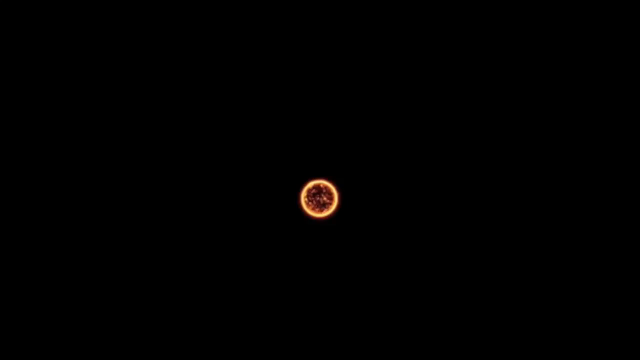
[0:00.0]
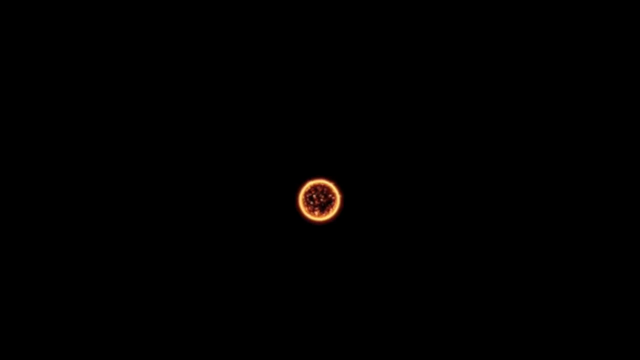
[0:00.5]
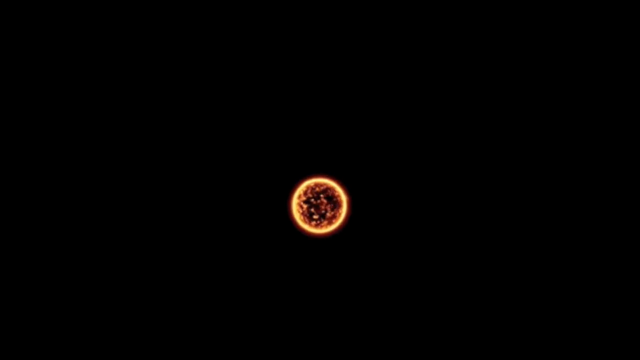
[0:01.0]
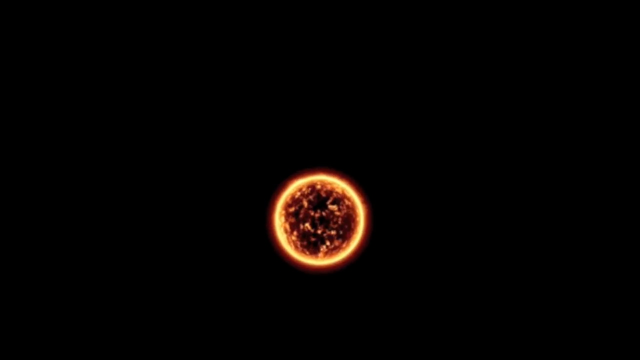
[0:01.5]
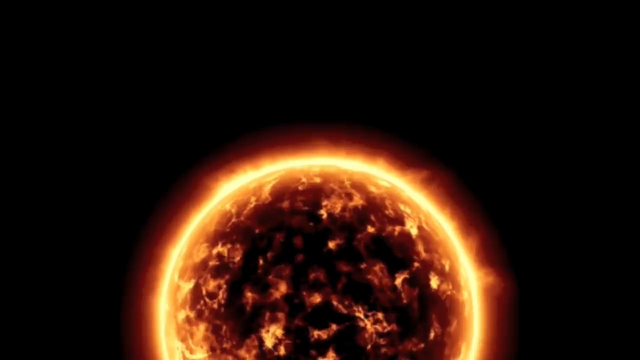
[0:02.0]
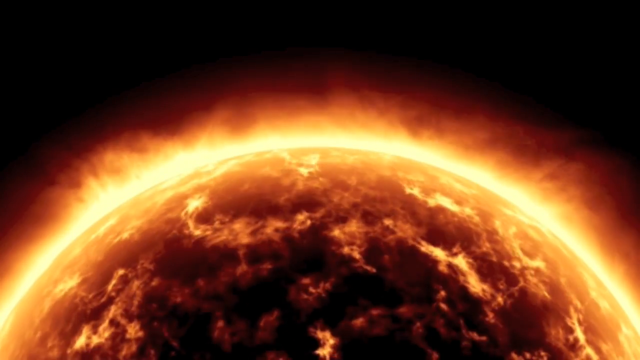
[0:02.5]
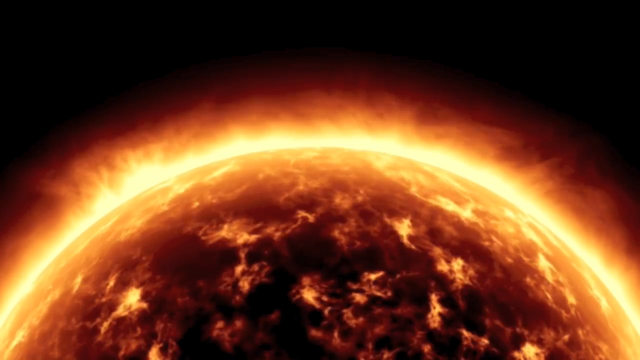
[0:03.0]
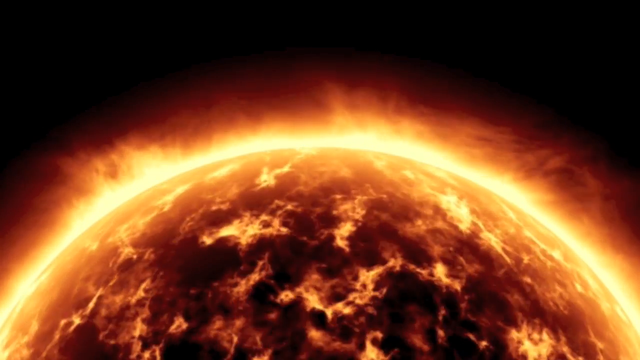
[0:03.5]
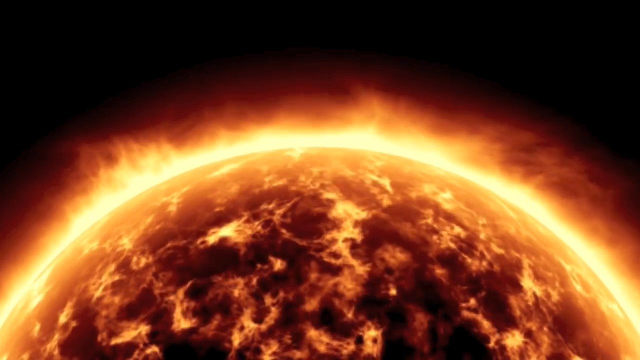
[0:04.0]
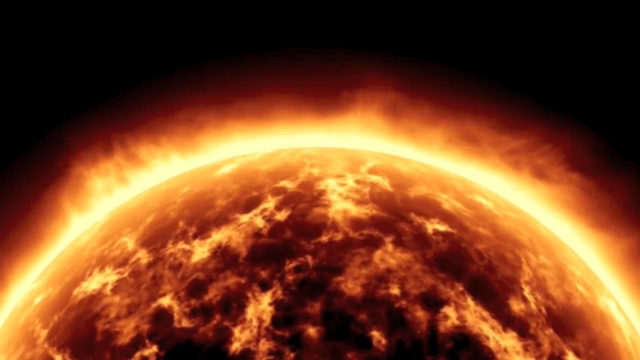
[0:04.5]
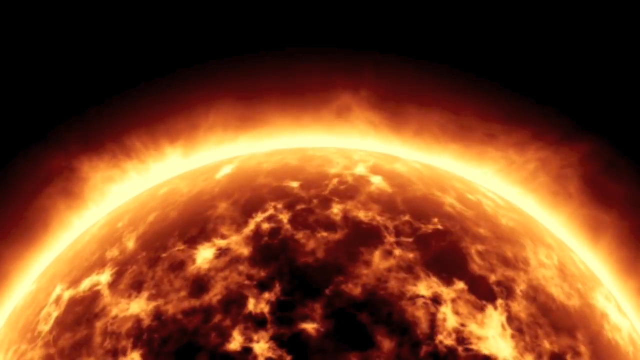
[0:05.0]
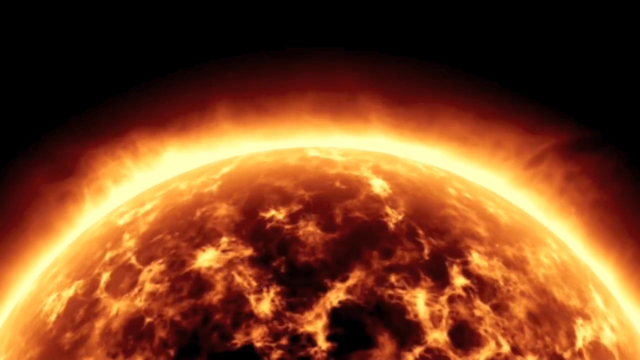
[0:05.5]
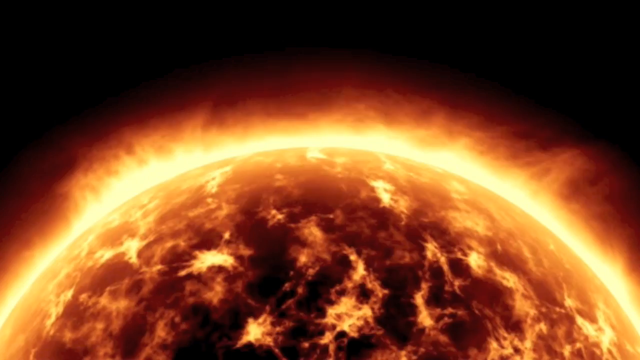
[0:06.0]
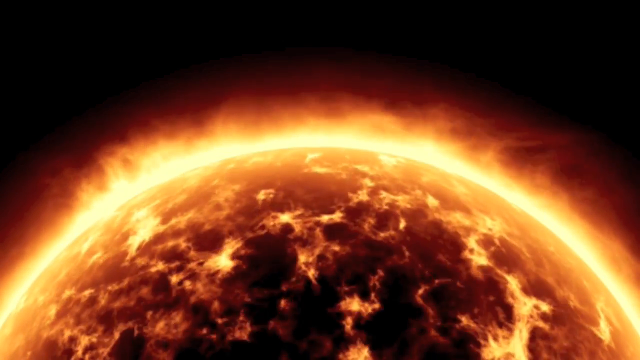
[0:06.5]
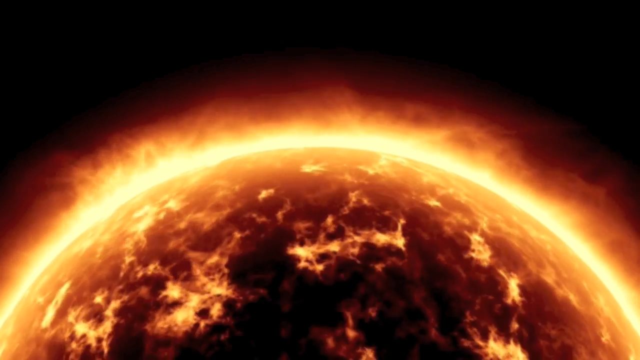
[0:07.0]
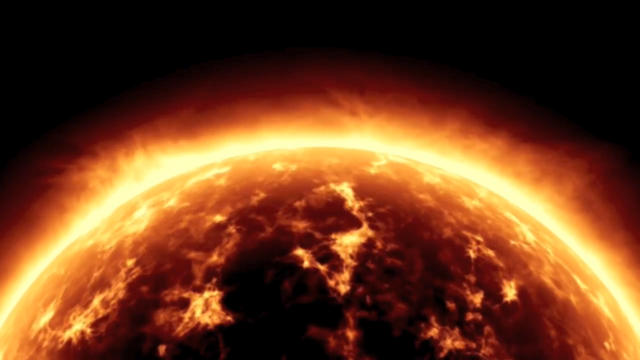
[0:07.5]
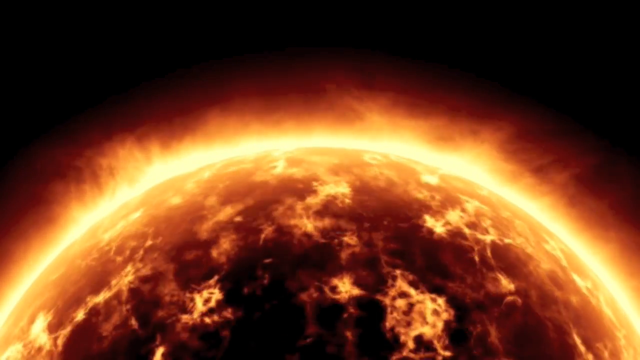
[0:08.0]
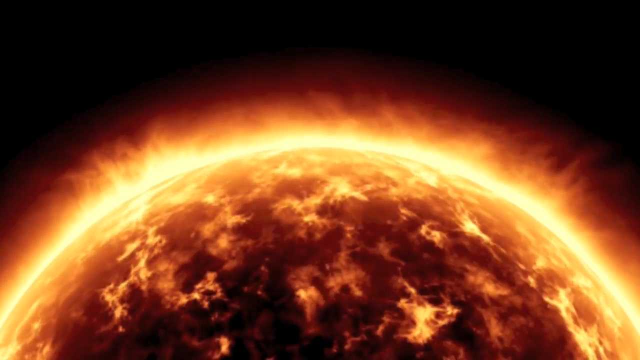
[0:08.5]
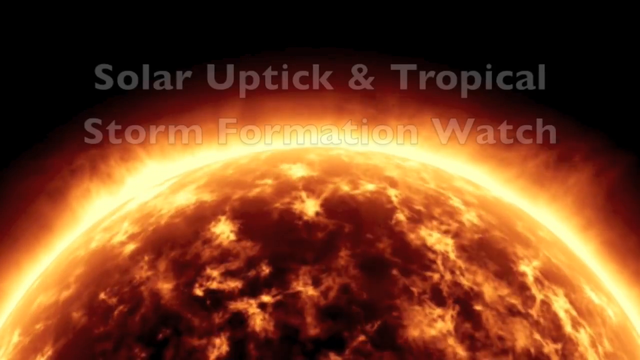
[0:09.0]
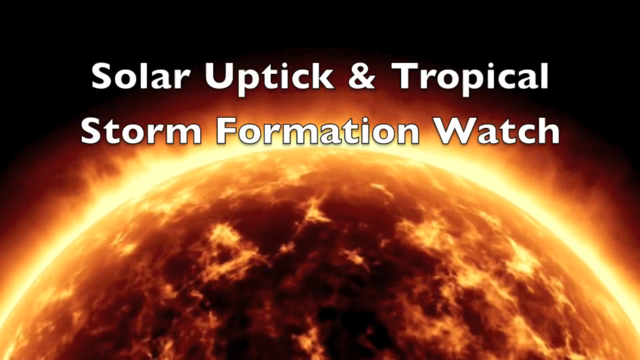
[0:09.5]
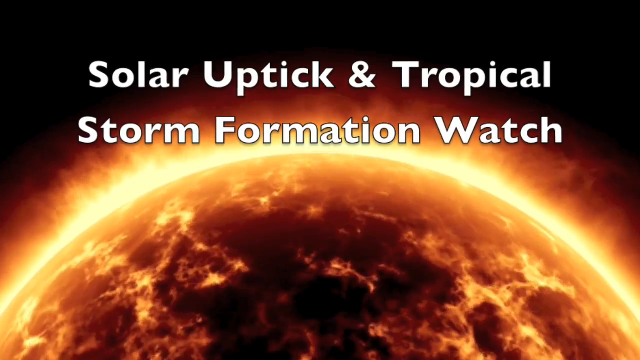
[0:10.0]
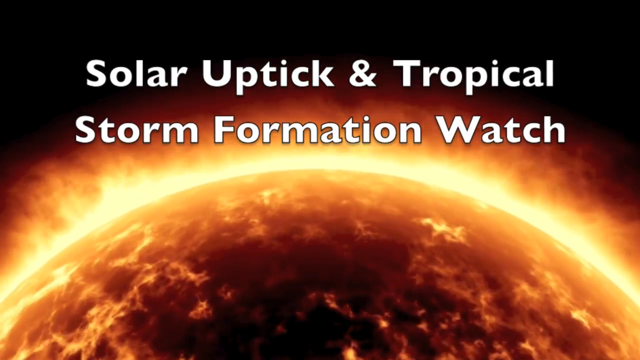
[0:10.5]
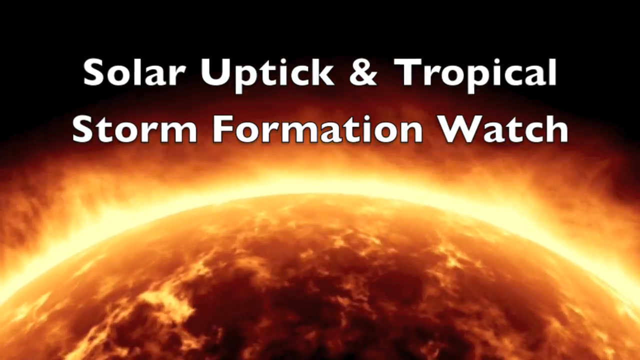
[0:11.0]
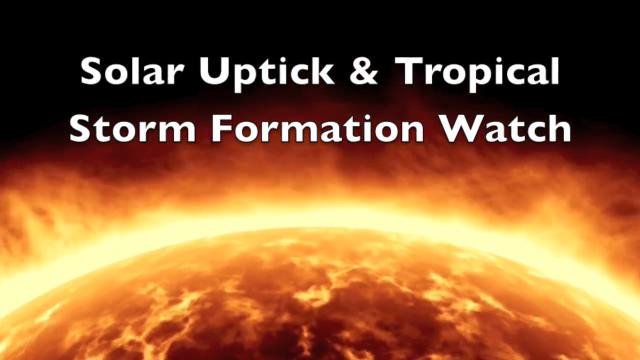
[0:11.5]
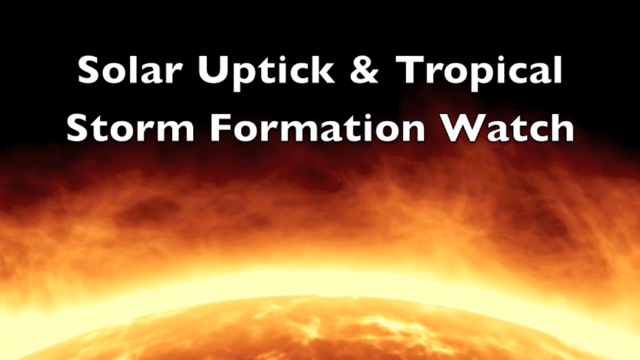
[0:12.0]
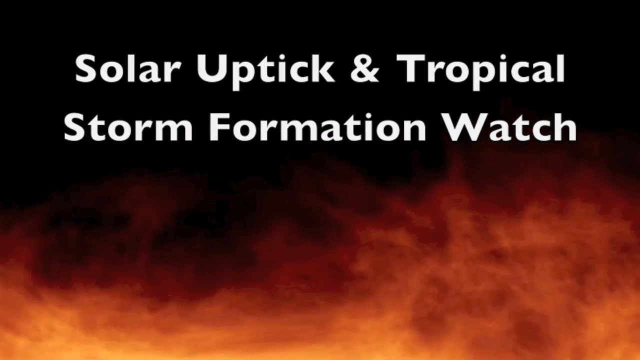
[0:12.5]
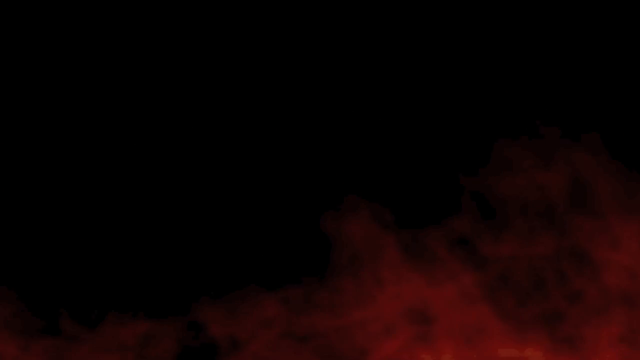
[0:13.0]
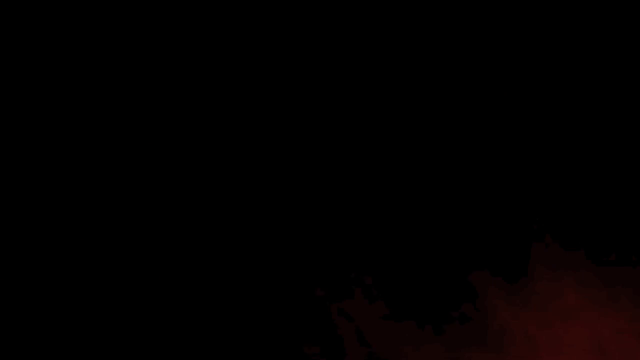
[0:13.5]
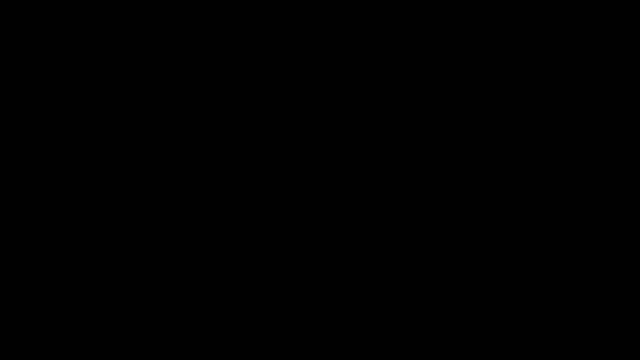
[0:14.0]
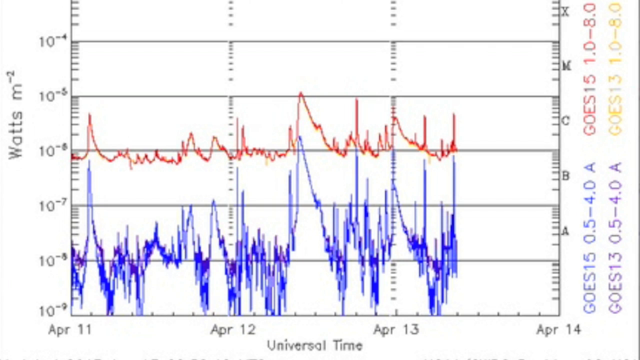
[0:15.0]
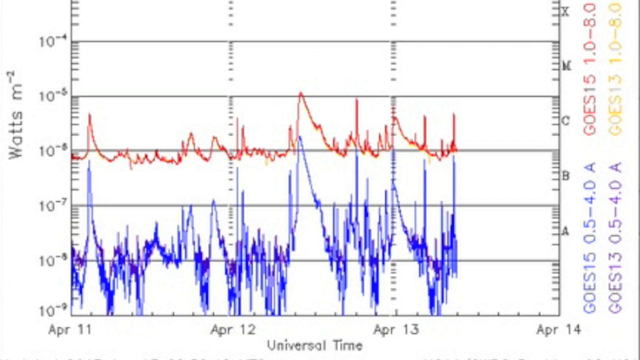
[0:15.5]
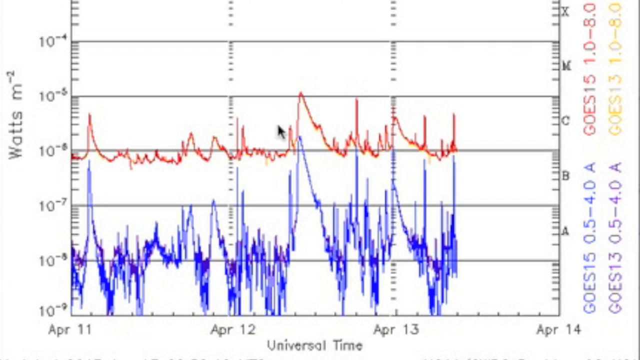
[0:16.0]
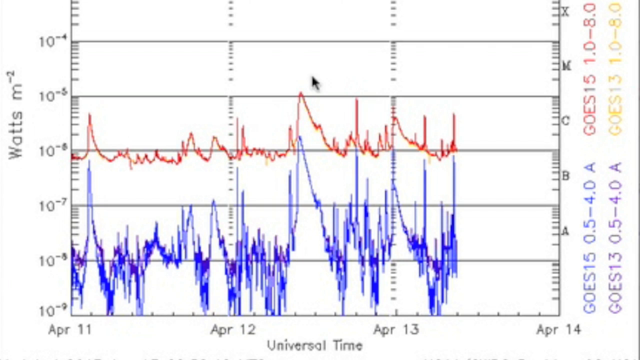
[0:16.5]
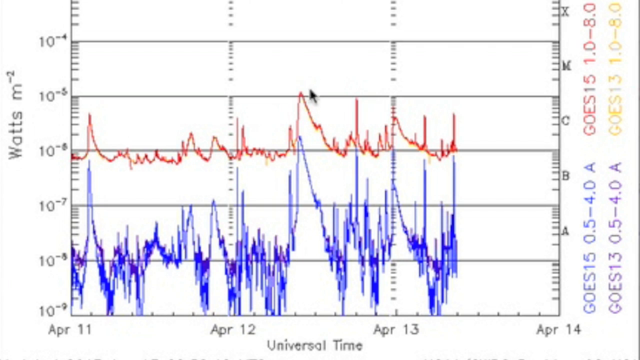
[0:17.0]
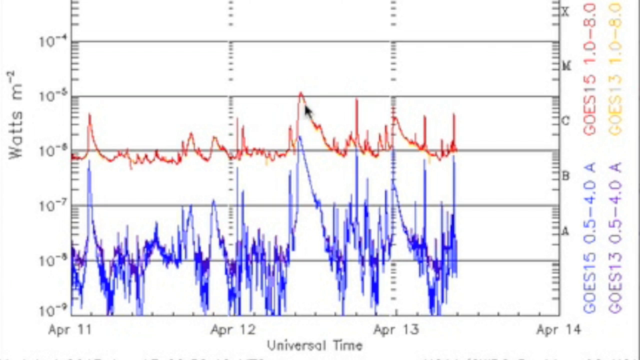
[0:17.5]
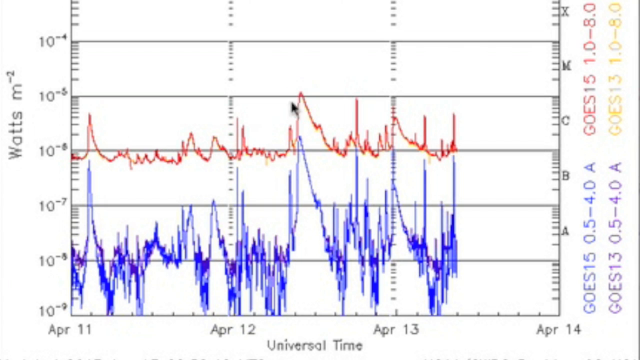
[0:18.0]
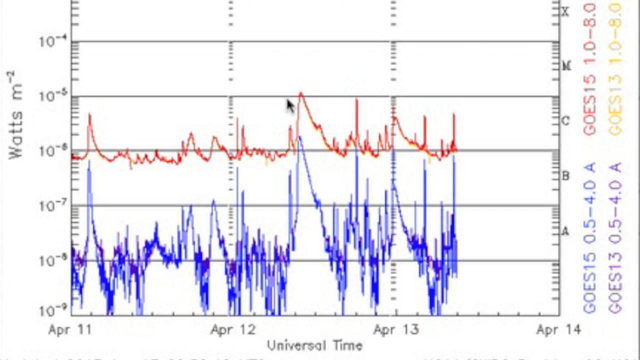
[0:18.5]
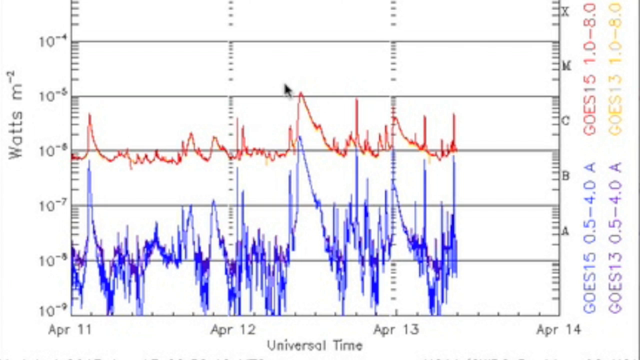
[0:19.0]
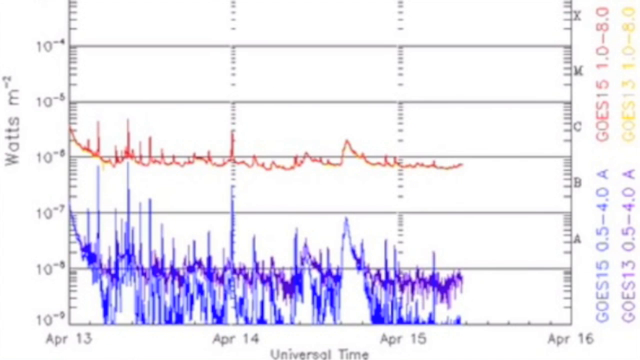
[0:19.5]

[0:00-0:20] A black background shows an orange circle that is black in the middle; it looks like lava and the surface of the sun. The view zooms in and goes to the surface, moving from the bottom left corner up to the middle and then to the bottom right corner. The surface appears to be moving and glows orange, with black background at the top. White text appears at the top reading "solar uptick and tropical storm formation watch". The video then zooms past the orange and black circle to what looks like a white background with a graph. The left side reads "watts m minus two" and the bottom reads "universal time". A red squiggly line runs at the top and a blue squiggly line at the bottom. A black mouse cursor moves to the middle and circles one of the squiggly lines at the top, the red one.